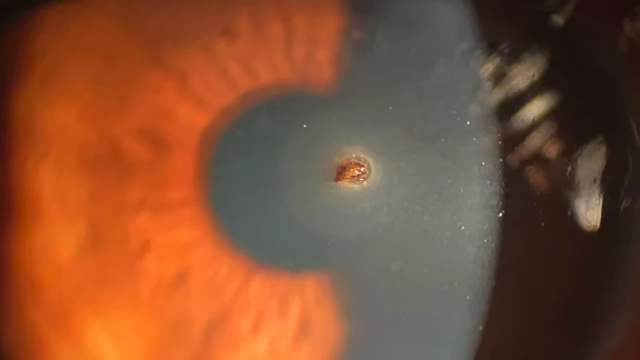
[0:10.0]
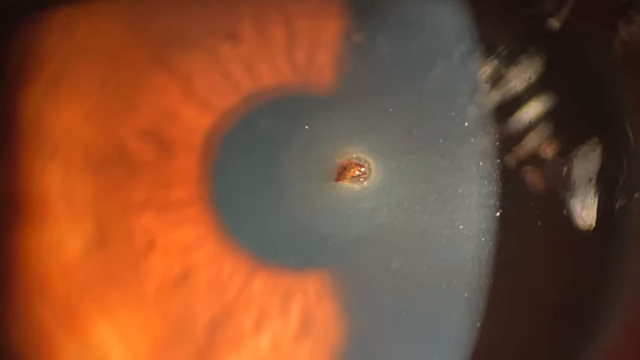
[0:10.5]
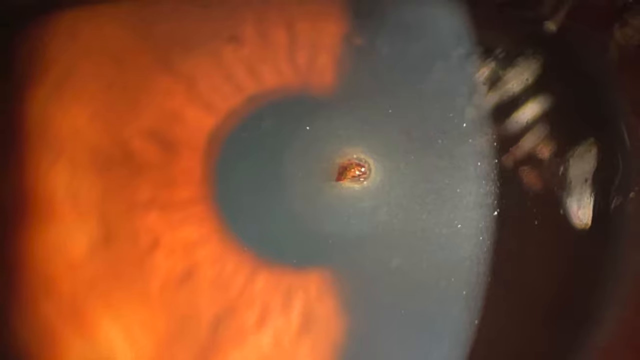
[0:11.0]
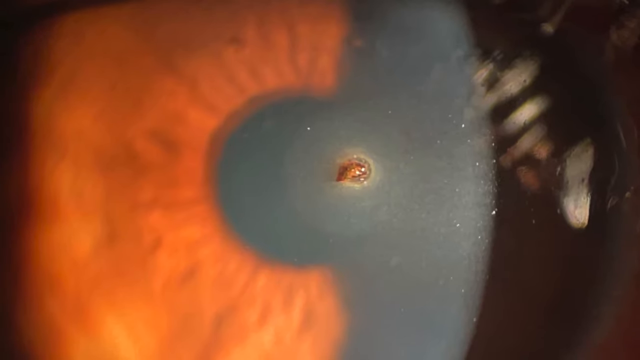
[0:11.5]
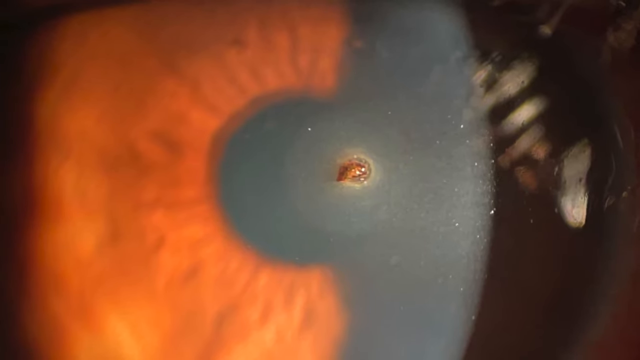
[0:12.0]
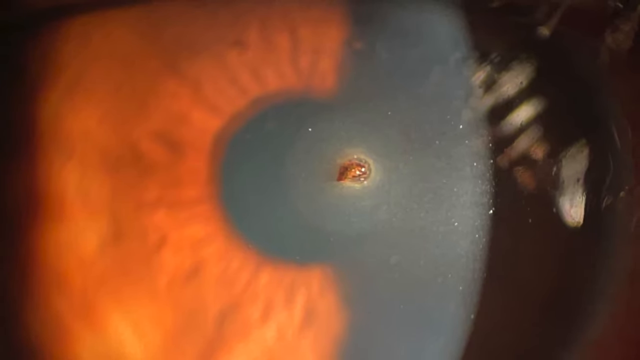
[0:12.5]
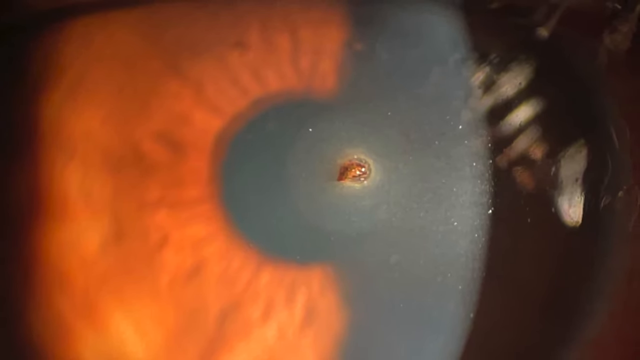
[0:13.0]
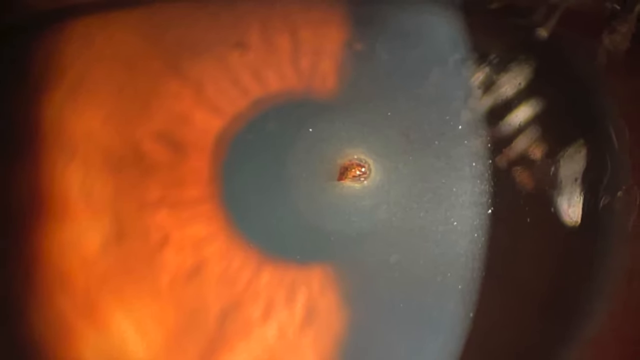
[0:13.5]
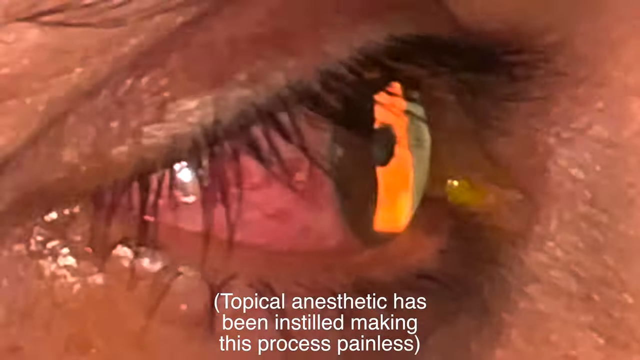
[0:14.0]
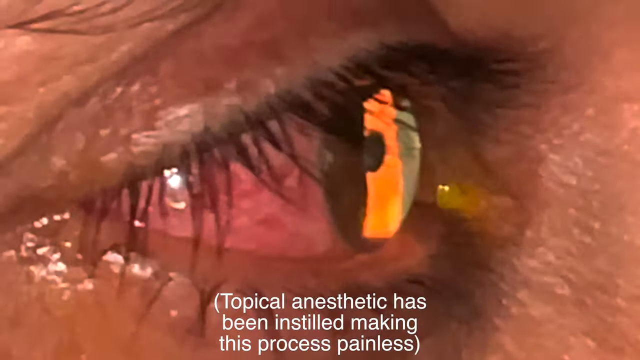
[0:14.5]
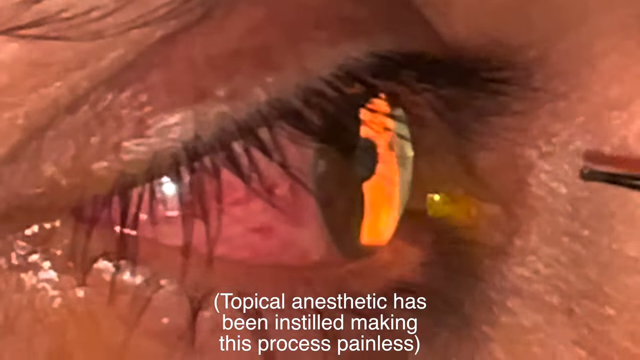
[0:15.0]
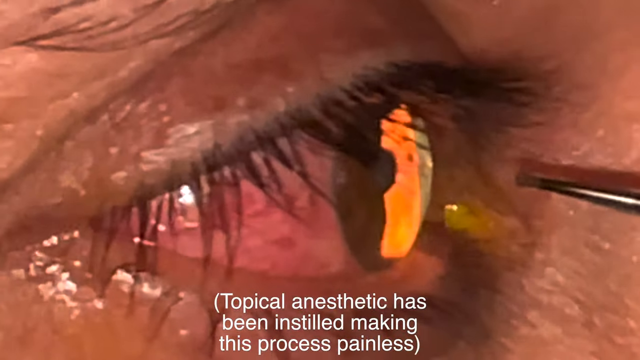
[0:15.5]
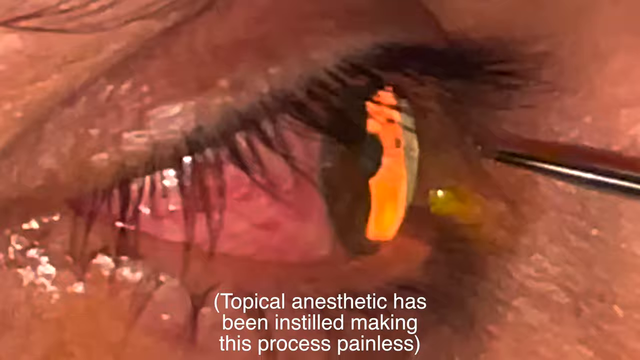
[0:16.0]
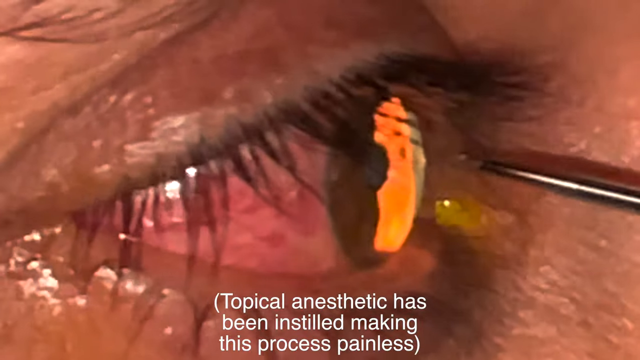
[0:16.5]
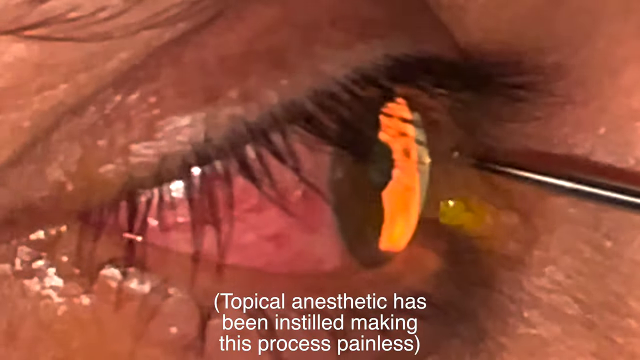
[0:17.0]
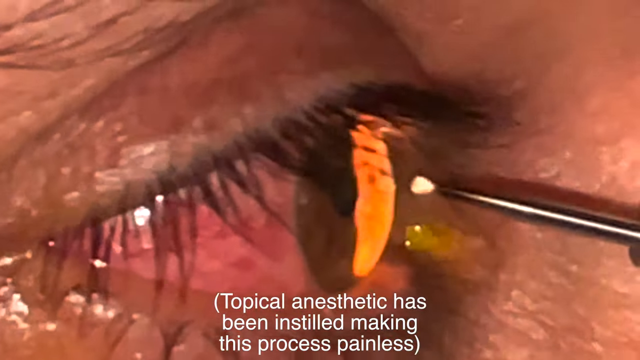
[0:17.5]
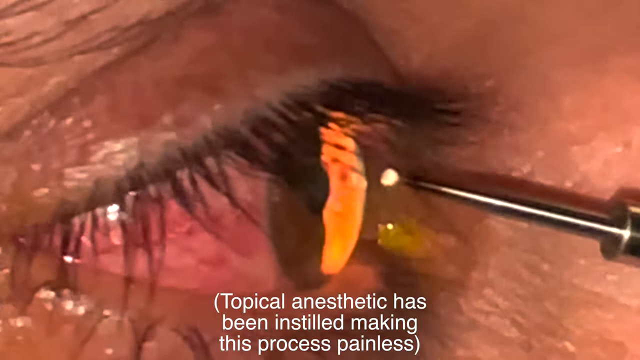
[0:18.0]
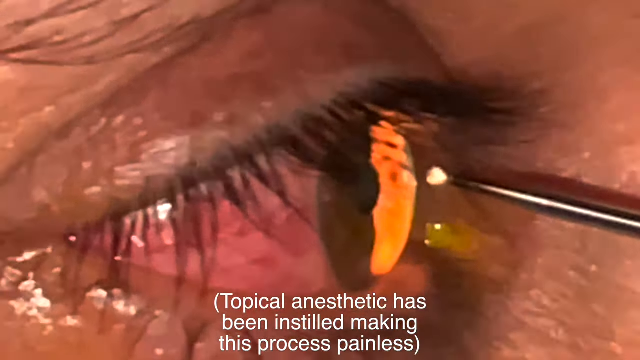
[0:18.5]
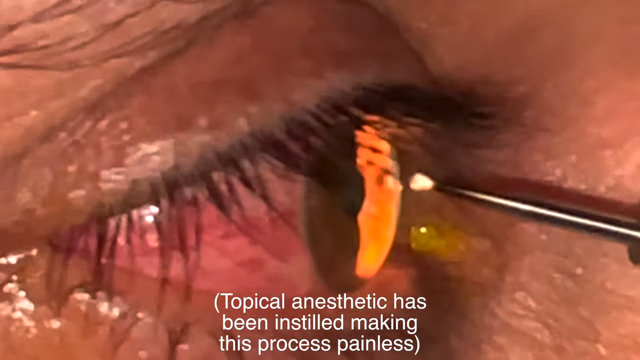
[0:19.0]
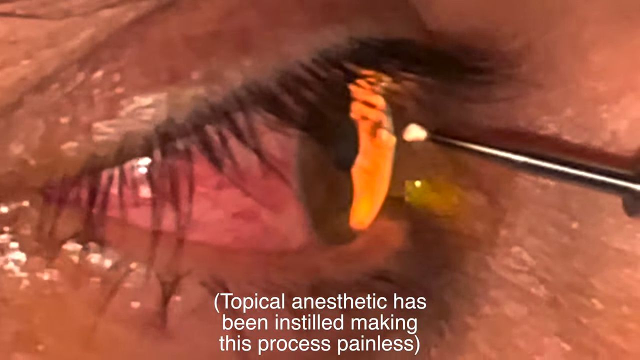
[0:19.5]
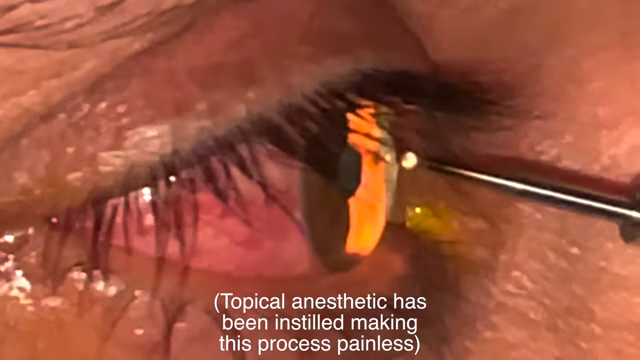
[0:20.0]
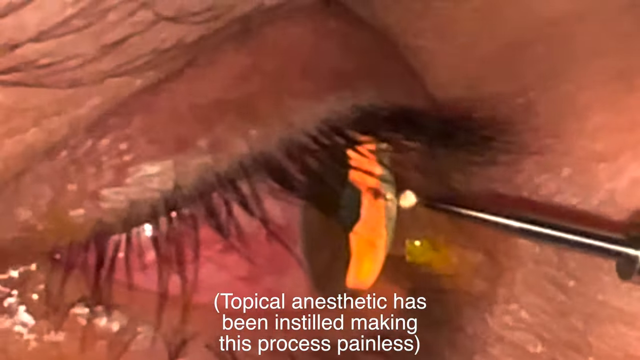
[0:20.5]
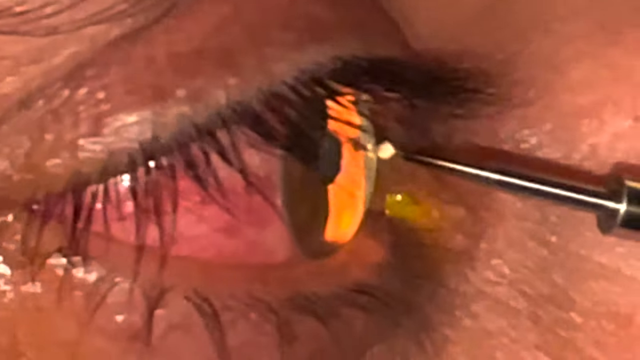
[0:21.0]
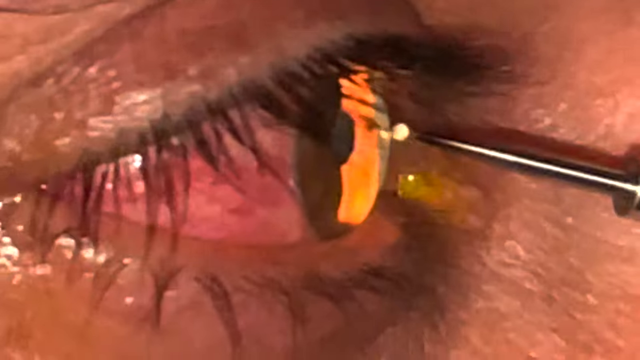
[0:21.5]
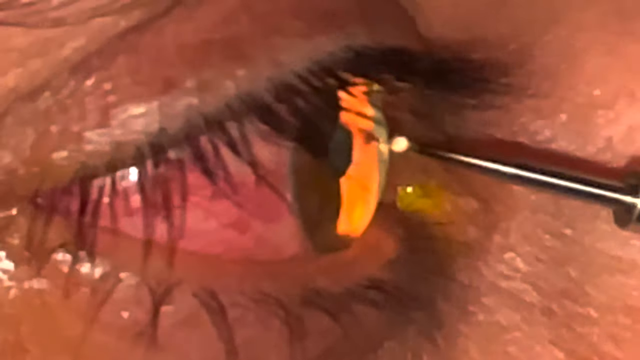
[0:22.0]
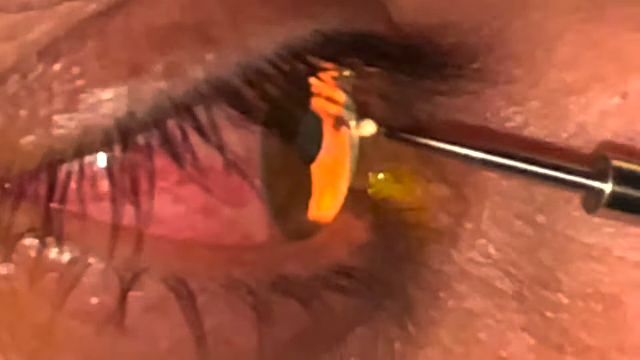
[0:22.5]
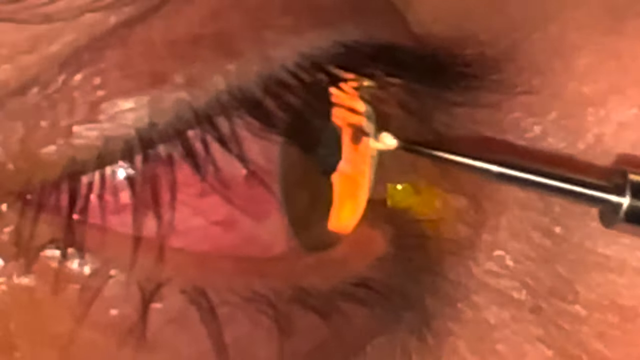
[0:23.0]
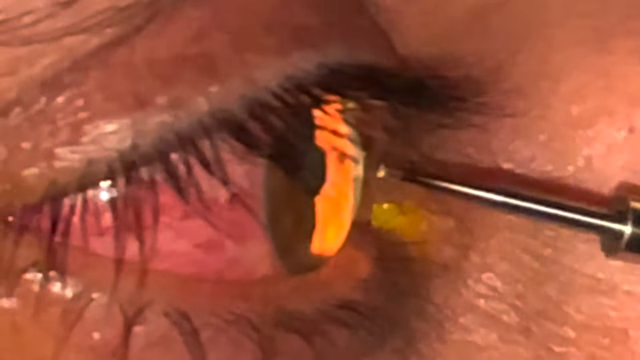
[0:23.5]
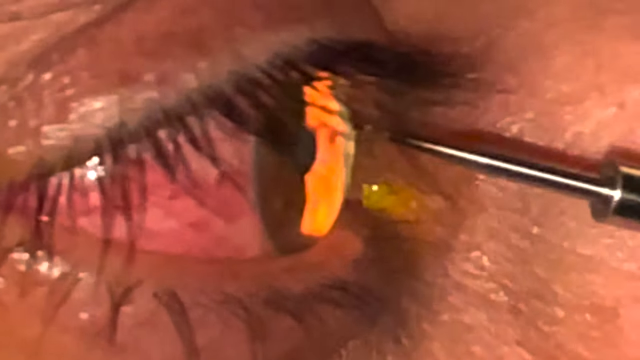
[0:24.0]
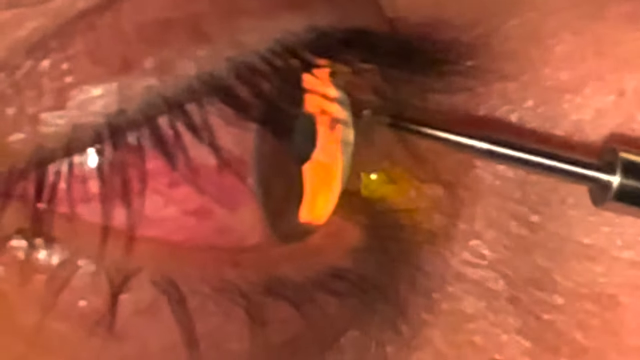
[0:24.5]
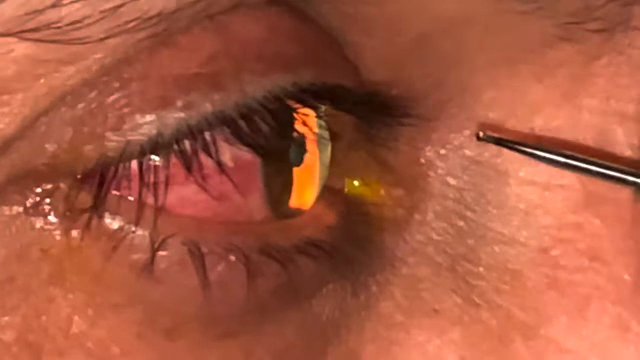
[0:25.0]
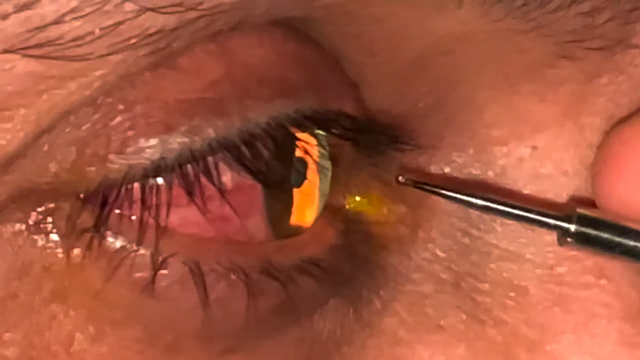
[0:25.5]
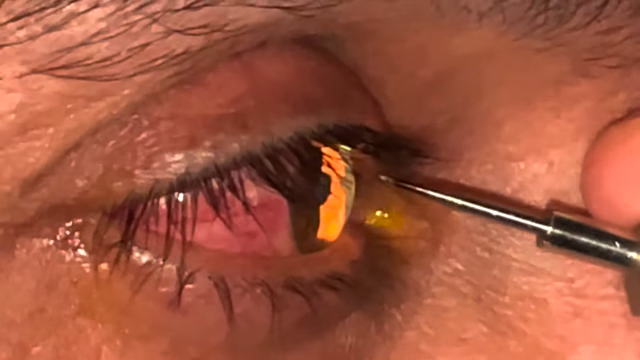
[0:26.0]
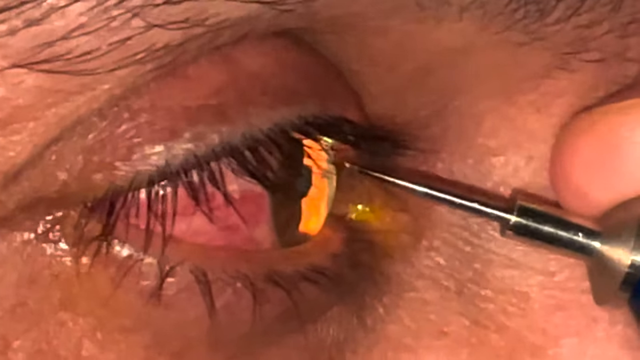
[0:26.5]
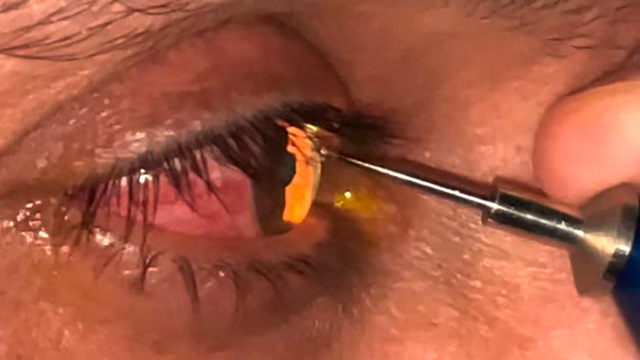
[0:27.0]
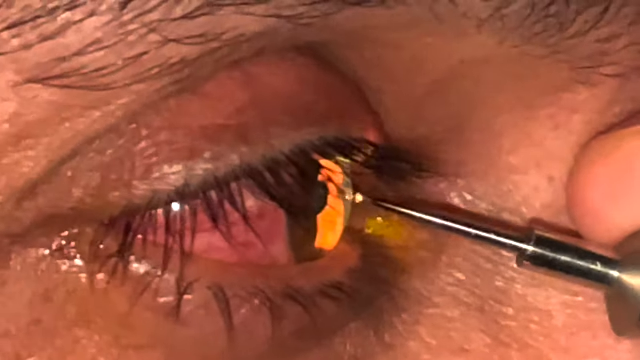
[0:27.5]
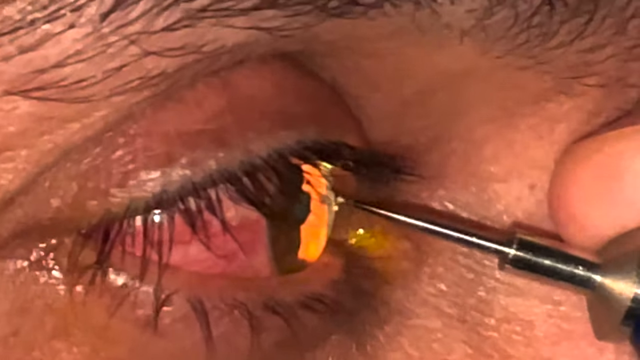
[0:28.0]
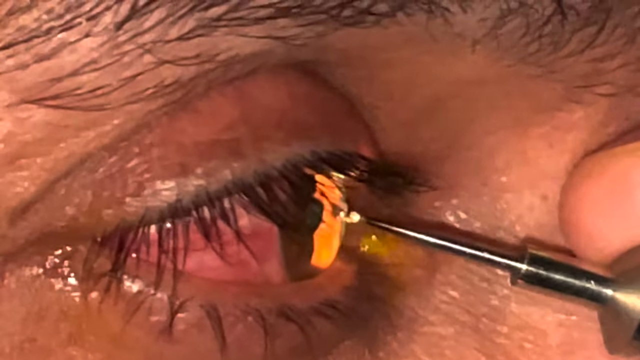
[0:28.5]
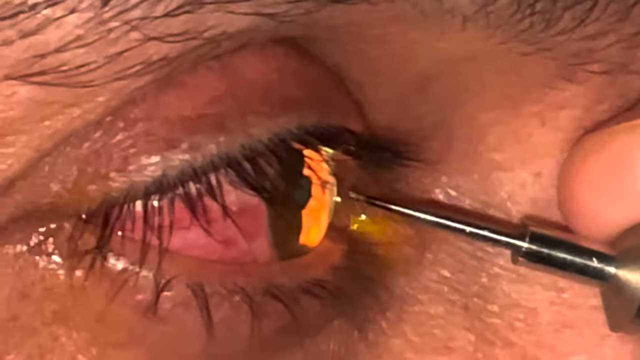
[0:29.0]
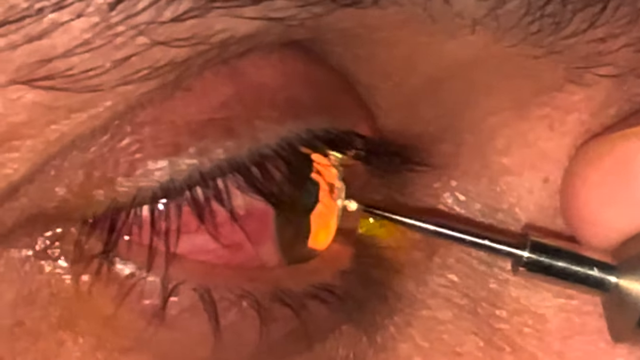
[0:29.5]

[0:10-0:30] The shot opens on a very close-up image of the foreign object, the metal lodged in the corner of the eye, then zooms out to show the side profile of a person. The profile is very zoomed in, showing the outer part of the eye and the eye itself, which is being highlighted by some type of medical instrument. An object is very close to the eye as some type of medical procedure is performed, with the eye operated on while the person is awake and the eye is open. The instrument comes very close to the eye and looks like it is producing some type of flame or fire on the eye.